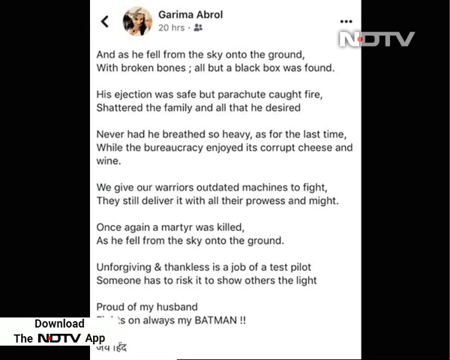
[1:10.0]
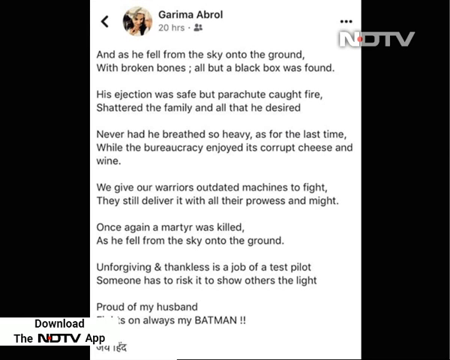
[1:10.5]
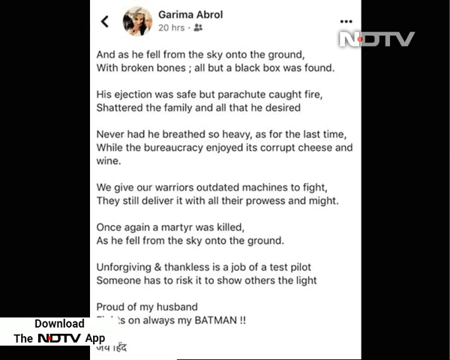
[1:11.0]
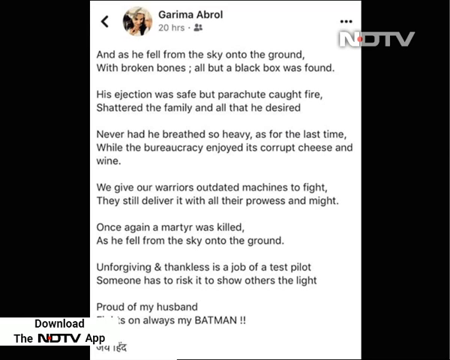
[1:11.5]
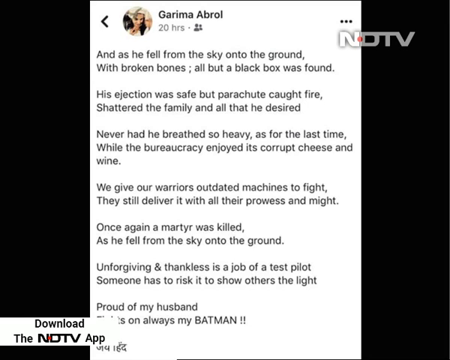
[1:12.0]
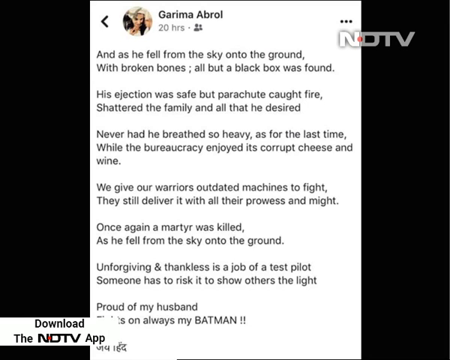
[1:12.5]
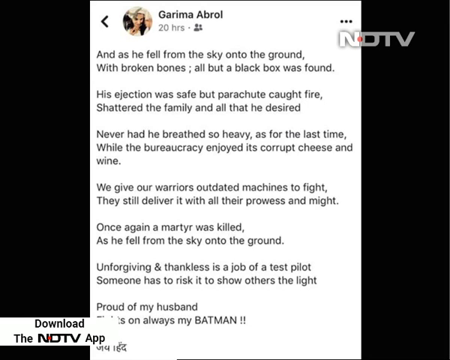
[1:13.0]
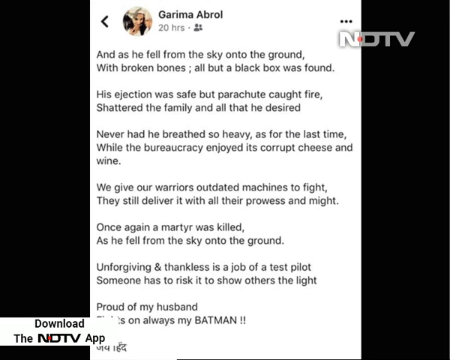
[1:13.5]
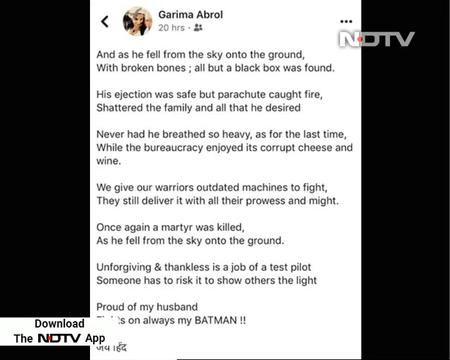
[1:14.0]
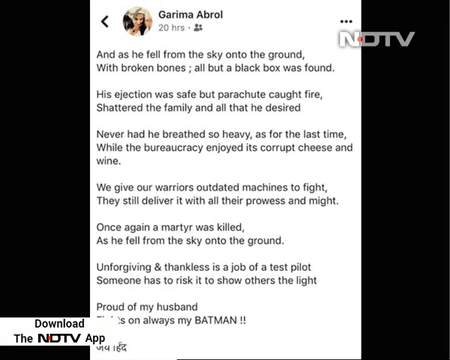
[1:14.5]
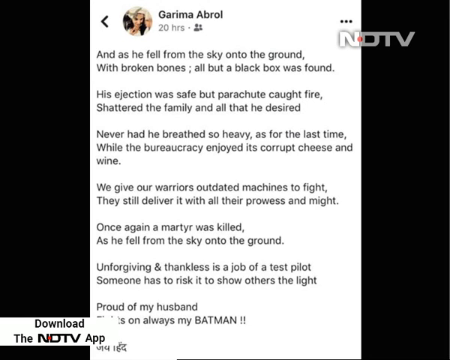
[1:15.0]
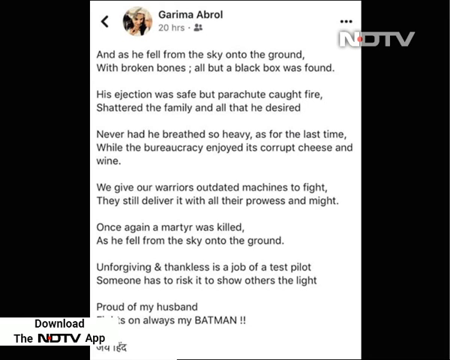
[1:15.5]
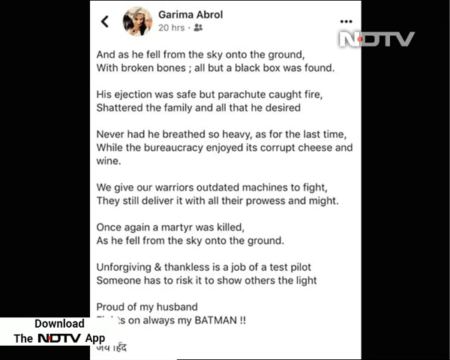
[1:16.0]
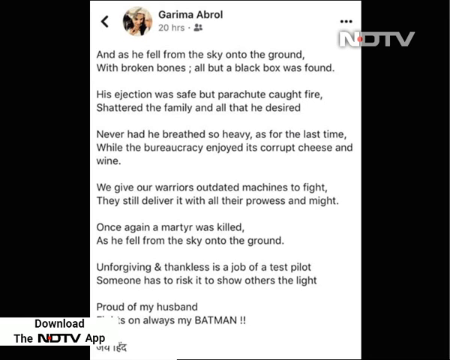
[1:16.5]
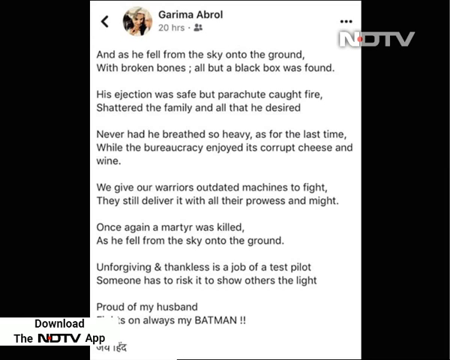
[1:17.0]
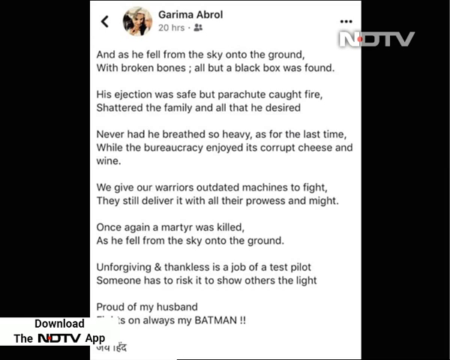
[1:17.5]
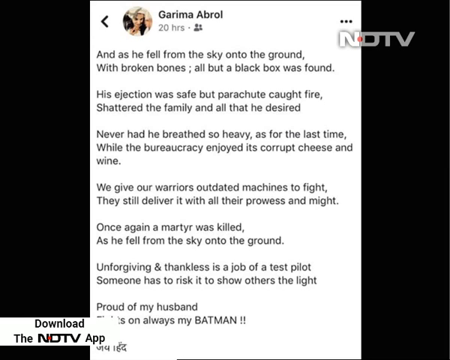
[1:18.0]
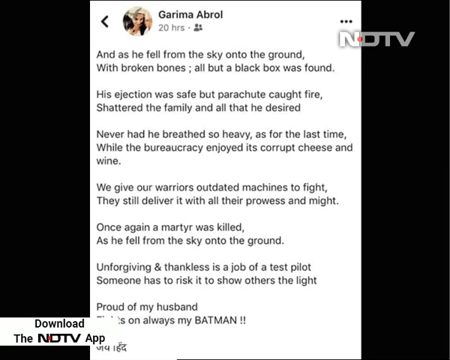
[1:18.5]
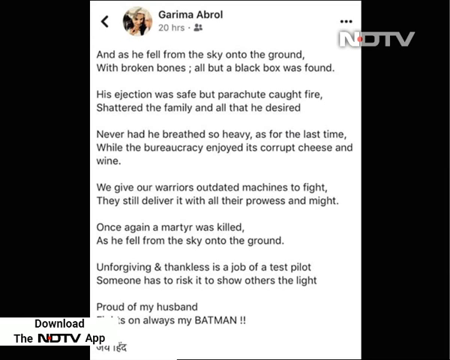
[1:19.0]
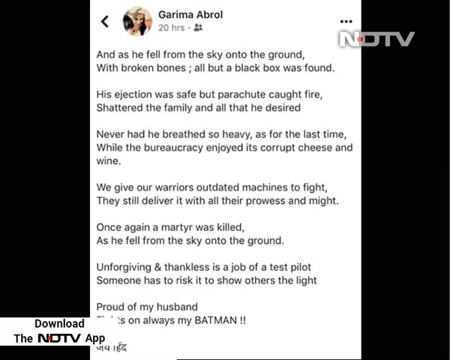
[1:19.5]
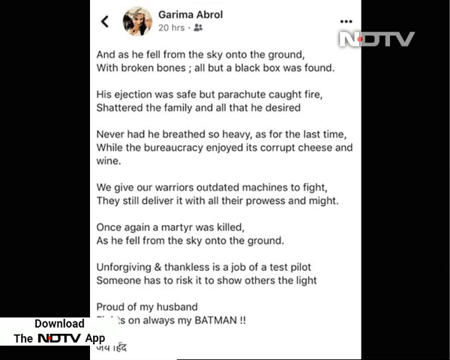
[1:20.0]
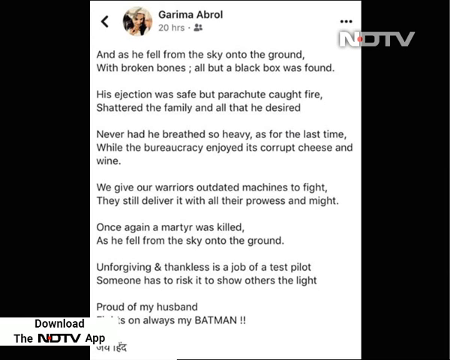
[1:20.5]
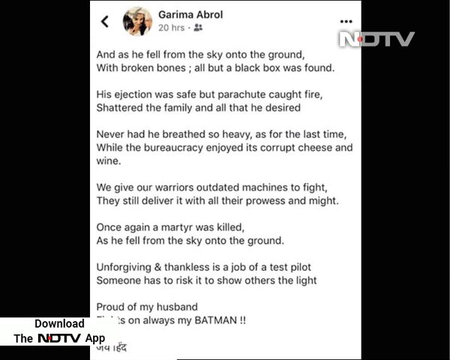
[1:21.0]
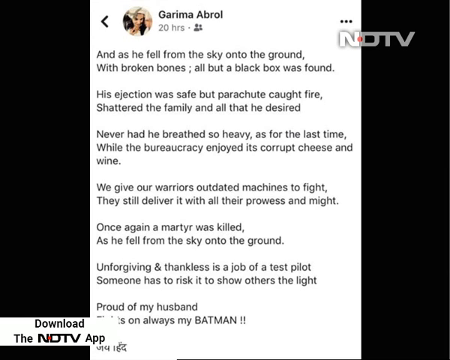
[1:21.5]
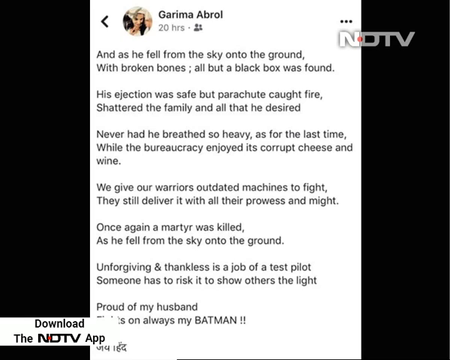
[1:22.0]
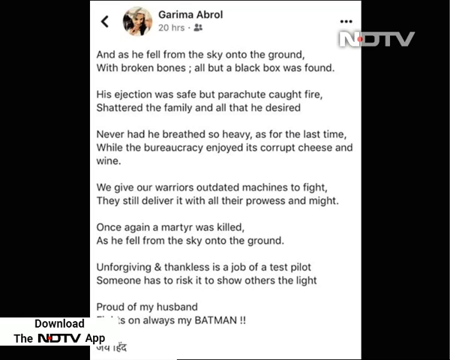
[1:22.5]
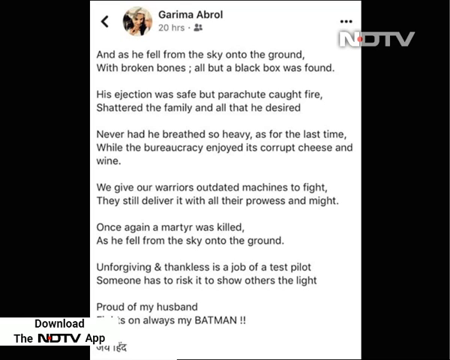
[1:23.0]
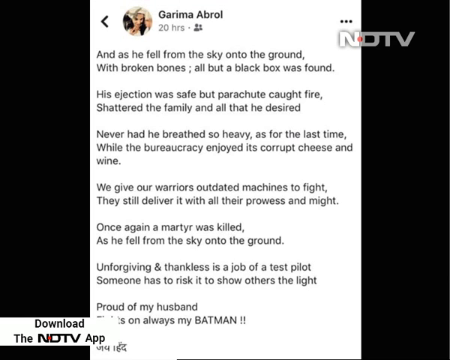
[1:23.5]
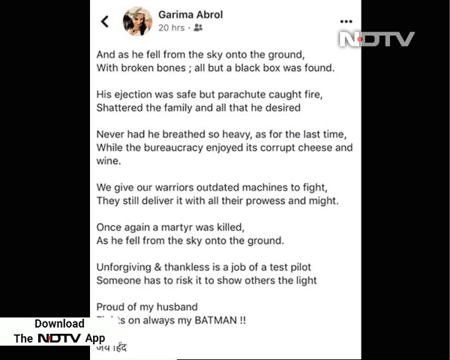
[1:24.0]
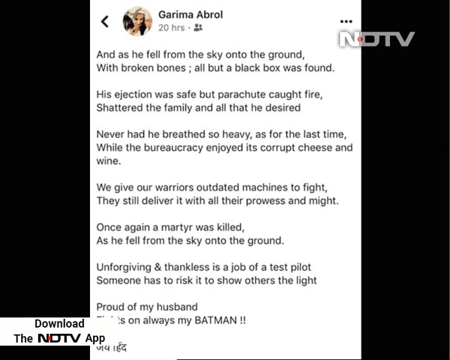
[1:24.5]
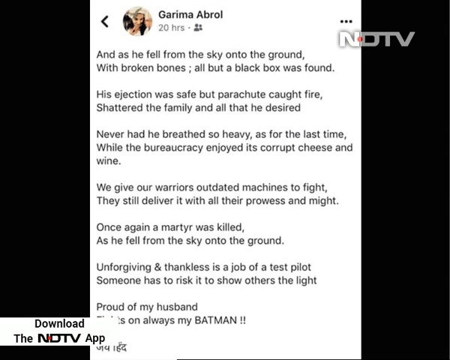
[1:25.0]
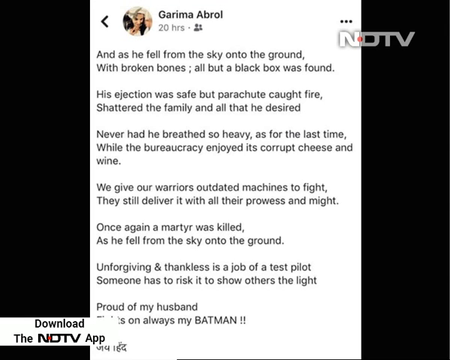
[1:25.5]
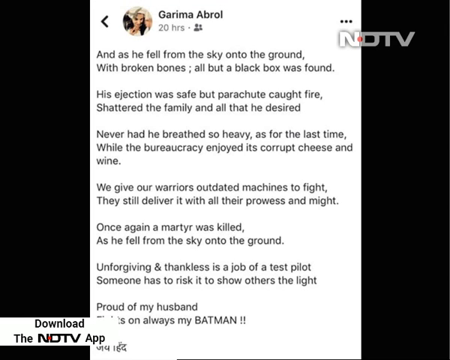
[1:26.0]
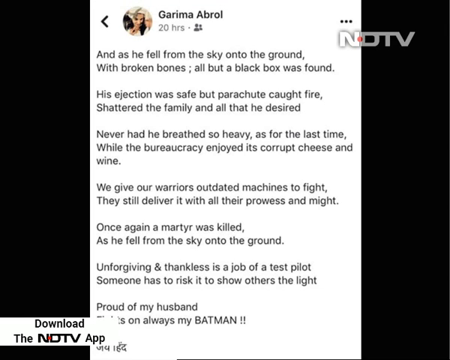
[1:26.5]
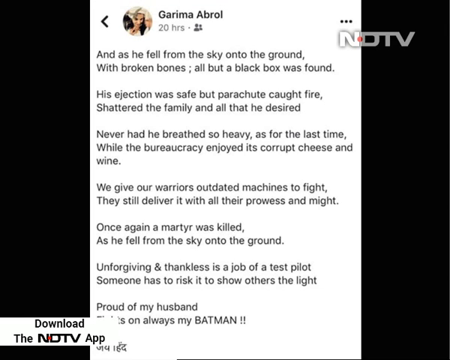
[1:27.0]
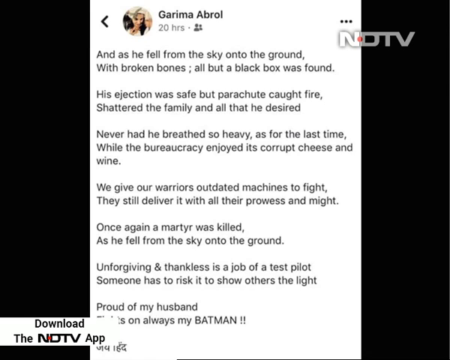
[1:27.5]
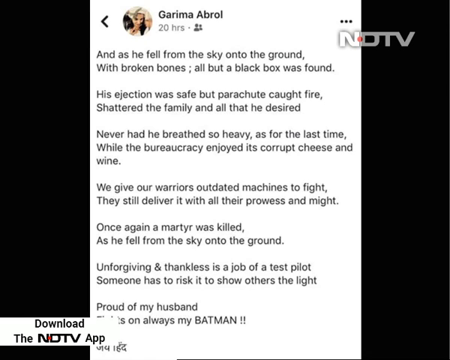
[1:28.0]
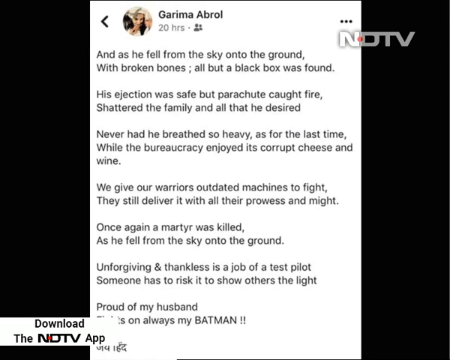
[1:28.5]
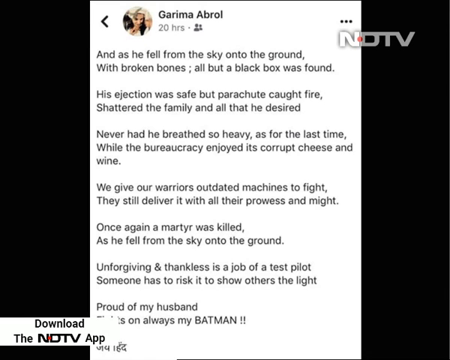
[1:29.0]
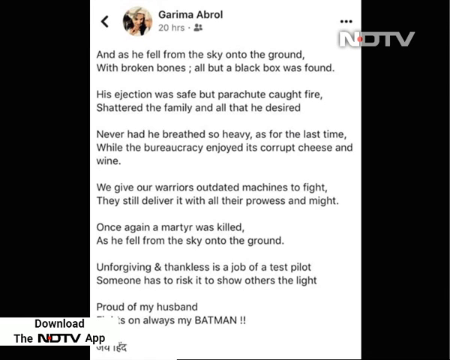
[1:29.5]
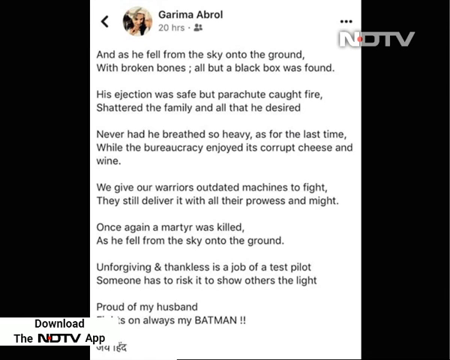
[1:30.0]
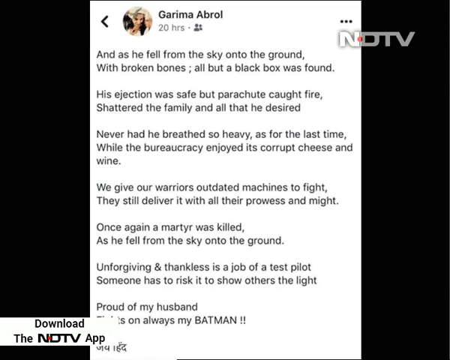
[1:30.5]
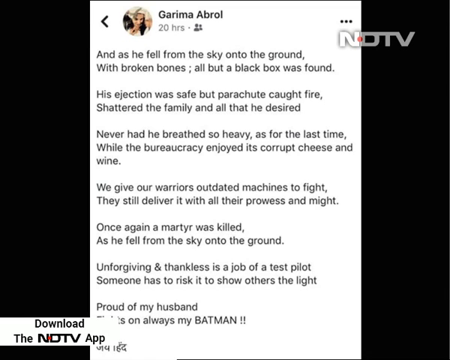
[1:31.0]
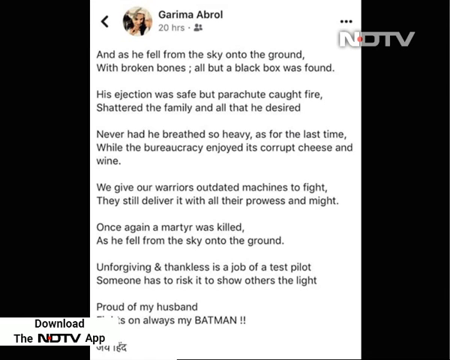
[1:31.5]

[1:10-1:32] An Indian news reporter appears, with channel text in the top right corner. Footage of the family follows, showing how much sorrow they are in. An Instagram post, apparently from the pilot's wife, is then shown, in which she expresses that she loves him and is very proud of her husband.